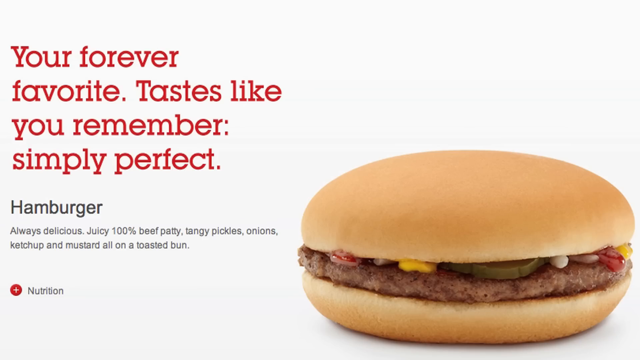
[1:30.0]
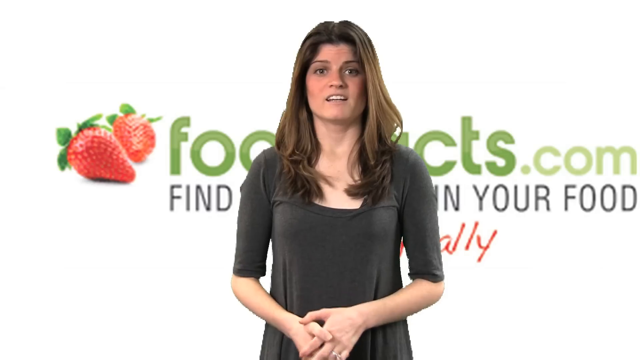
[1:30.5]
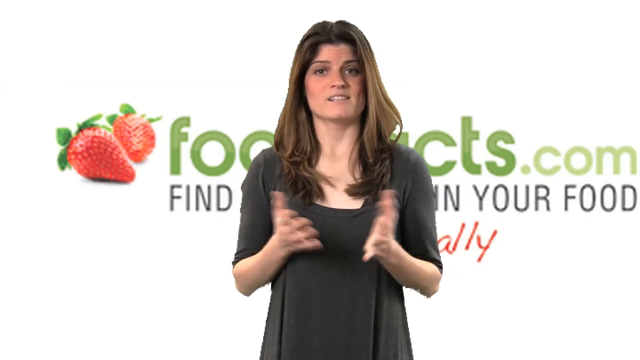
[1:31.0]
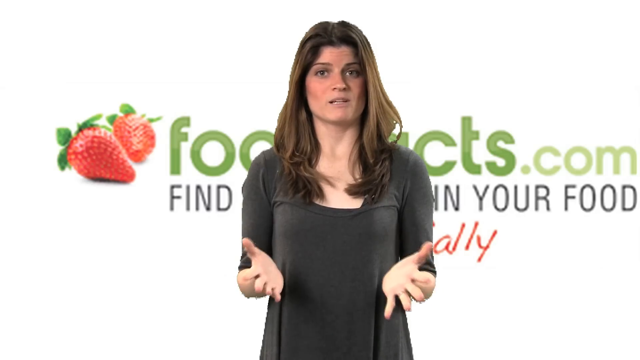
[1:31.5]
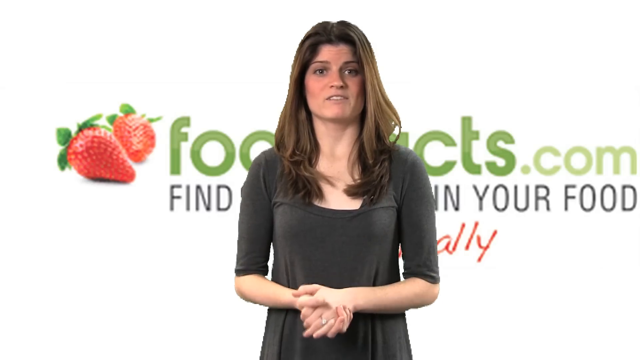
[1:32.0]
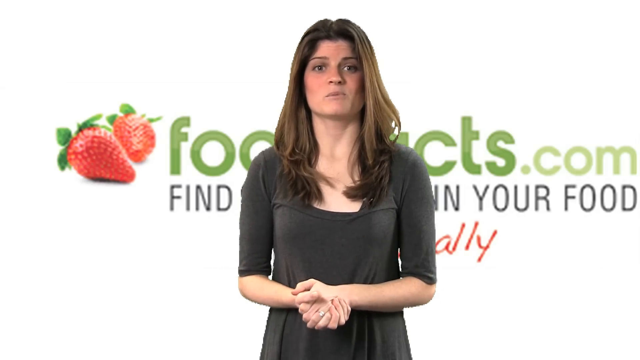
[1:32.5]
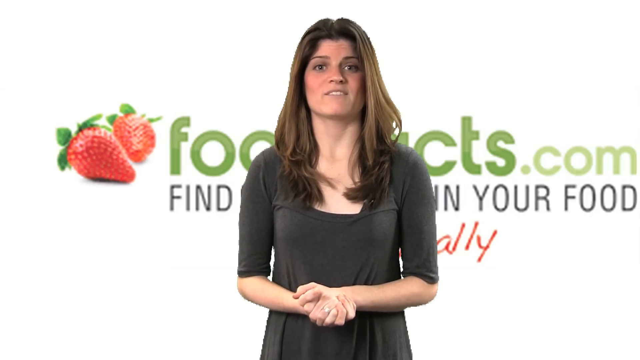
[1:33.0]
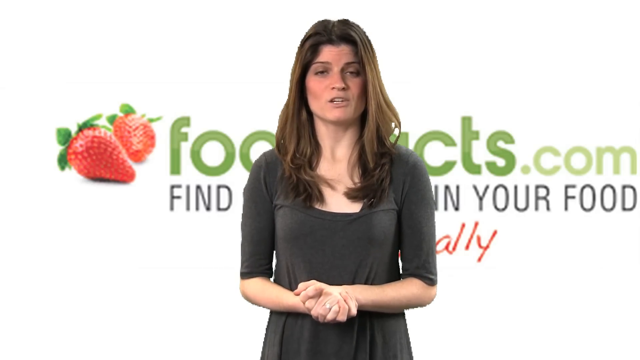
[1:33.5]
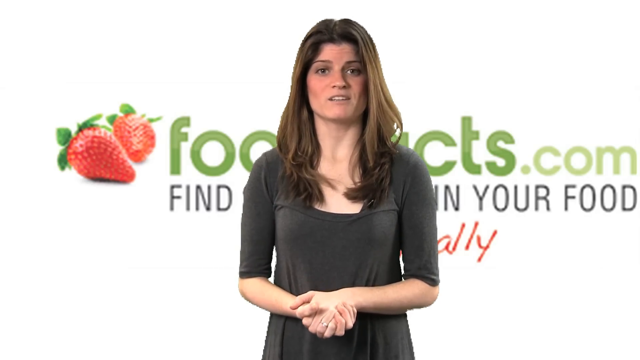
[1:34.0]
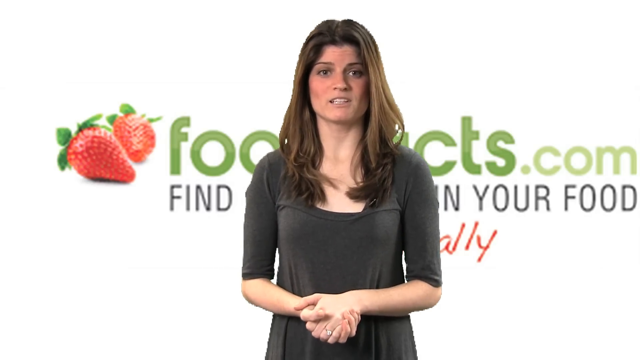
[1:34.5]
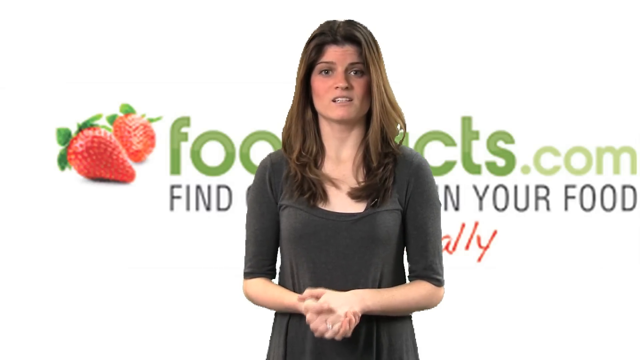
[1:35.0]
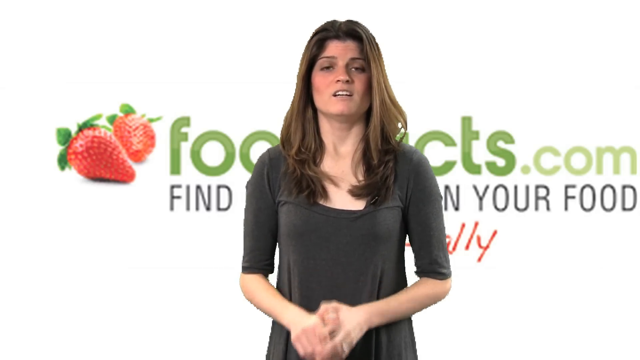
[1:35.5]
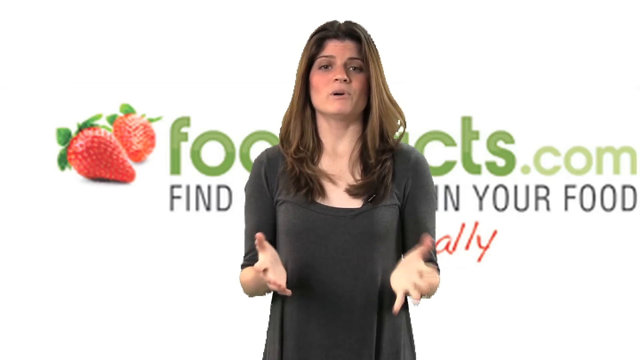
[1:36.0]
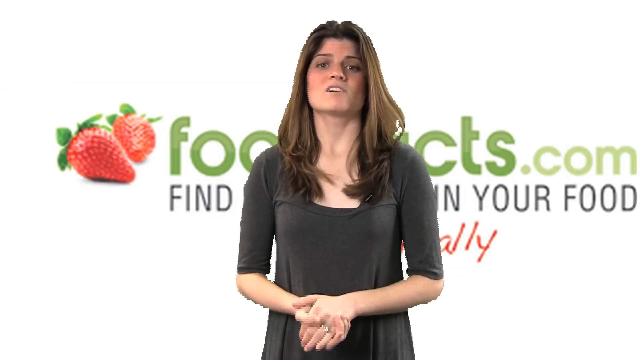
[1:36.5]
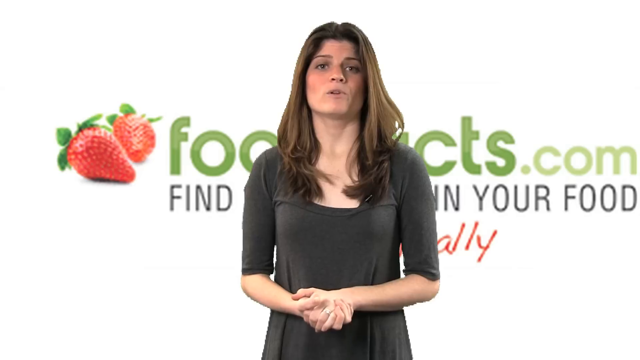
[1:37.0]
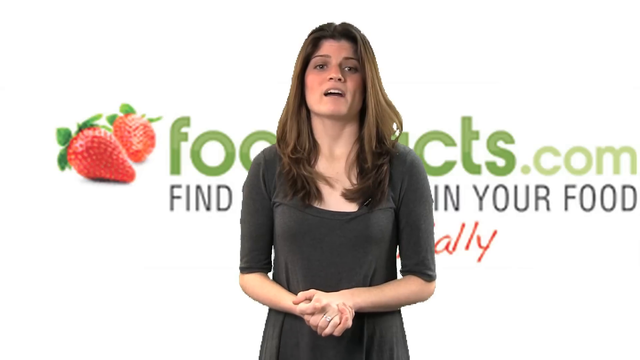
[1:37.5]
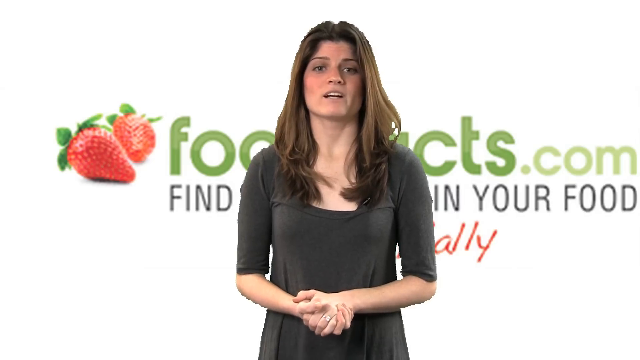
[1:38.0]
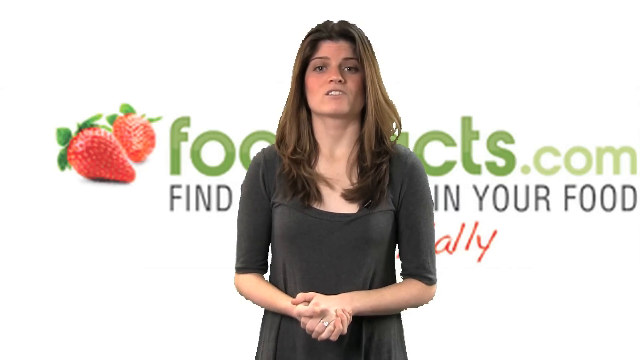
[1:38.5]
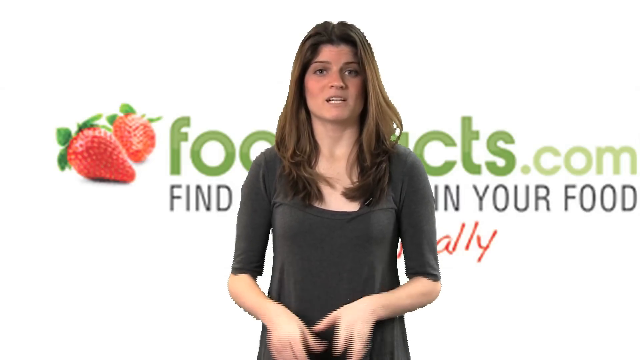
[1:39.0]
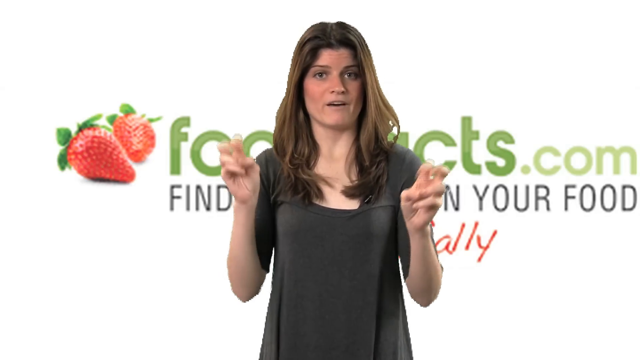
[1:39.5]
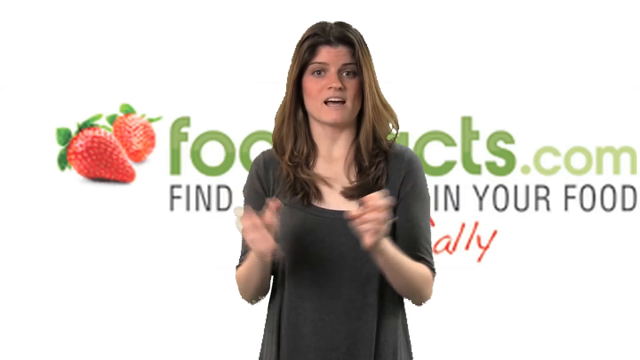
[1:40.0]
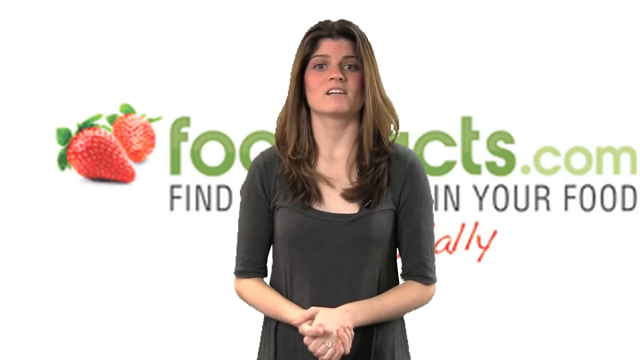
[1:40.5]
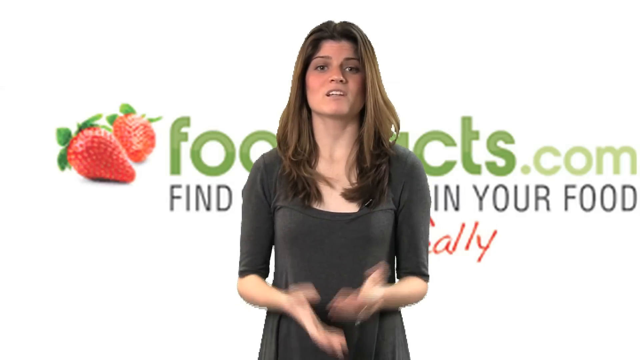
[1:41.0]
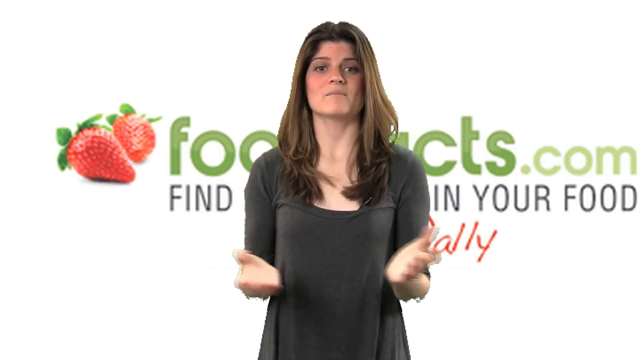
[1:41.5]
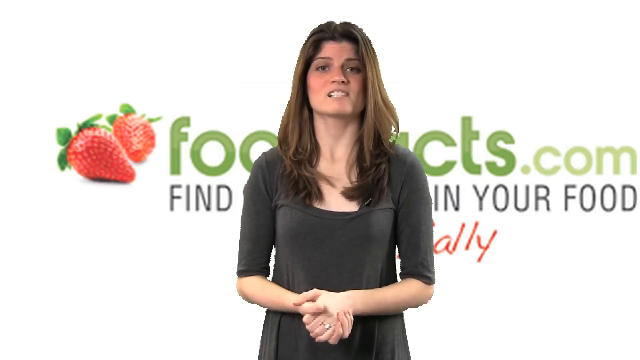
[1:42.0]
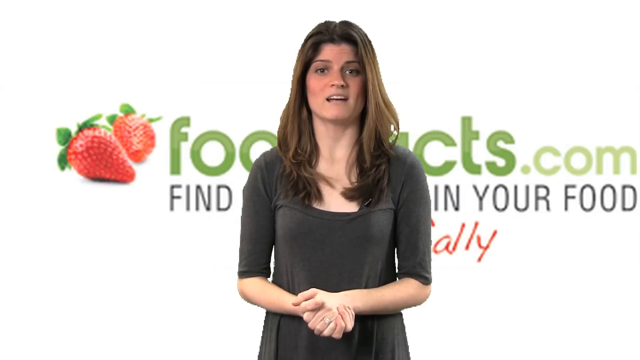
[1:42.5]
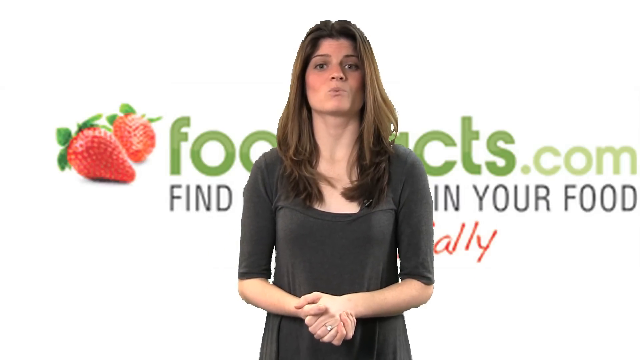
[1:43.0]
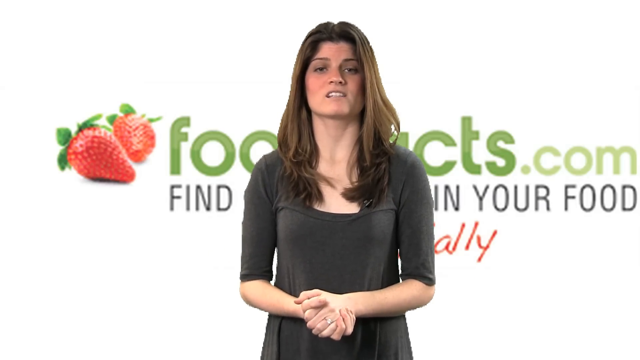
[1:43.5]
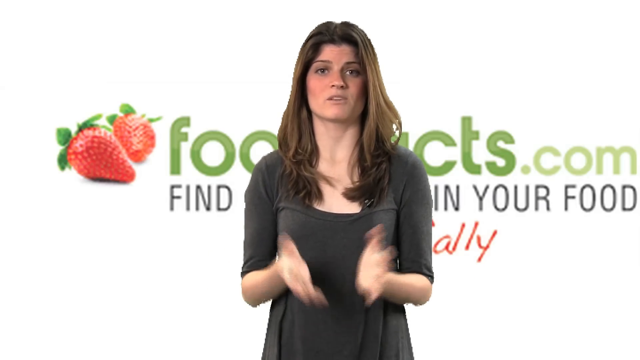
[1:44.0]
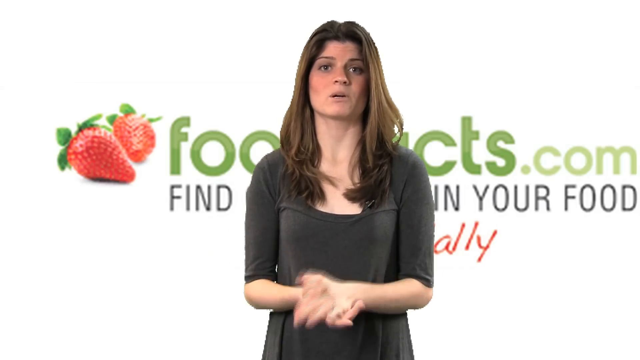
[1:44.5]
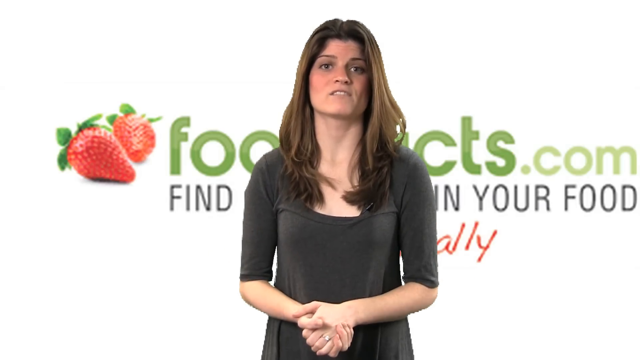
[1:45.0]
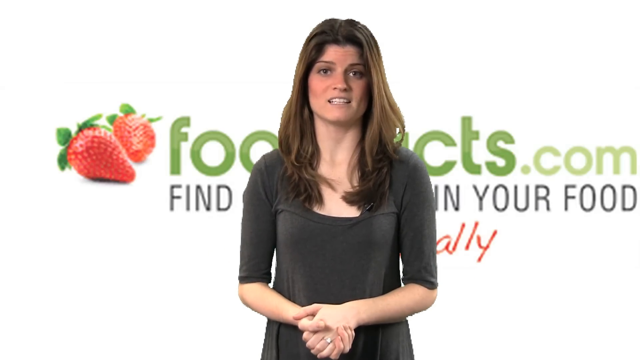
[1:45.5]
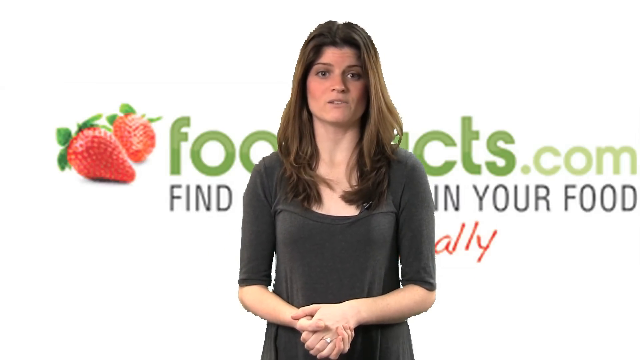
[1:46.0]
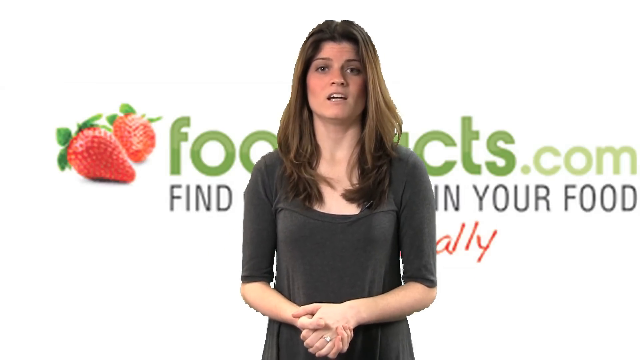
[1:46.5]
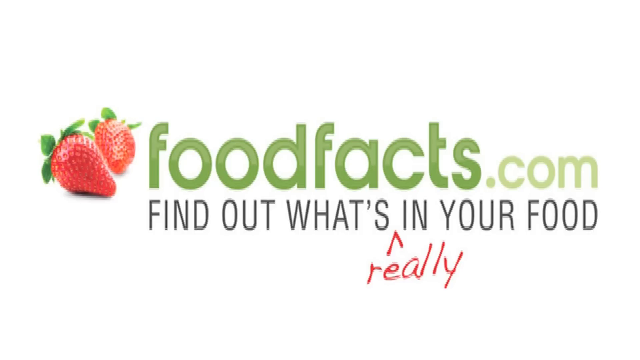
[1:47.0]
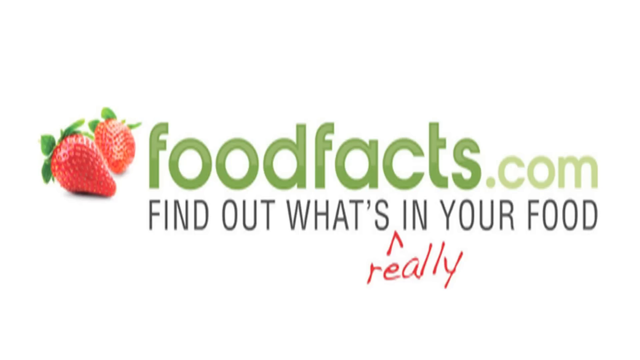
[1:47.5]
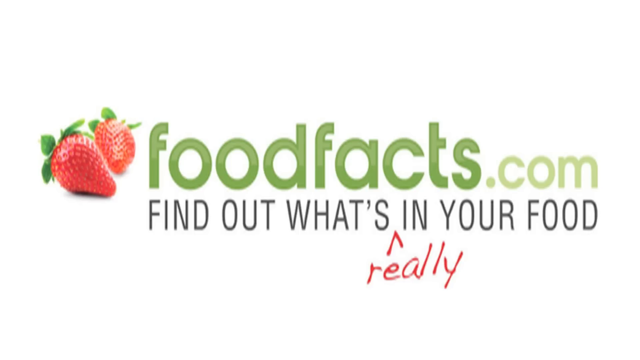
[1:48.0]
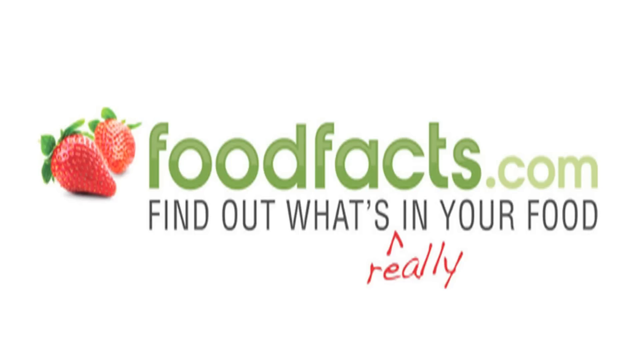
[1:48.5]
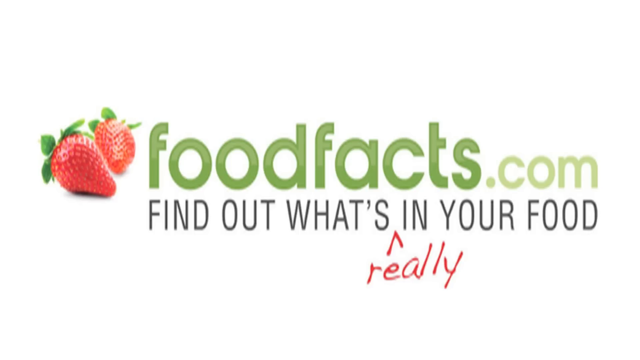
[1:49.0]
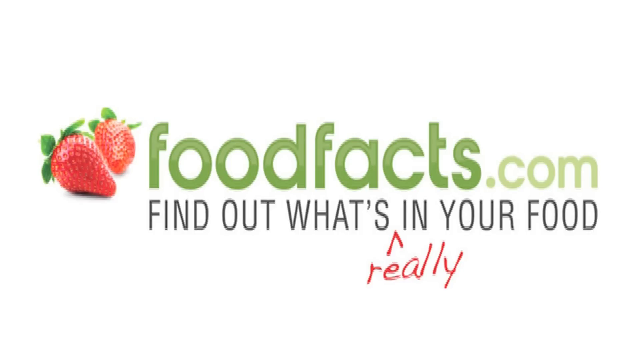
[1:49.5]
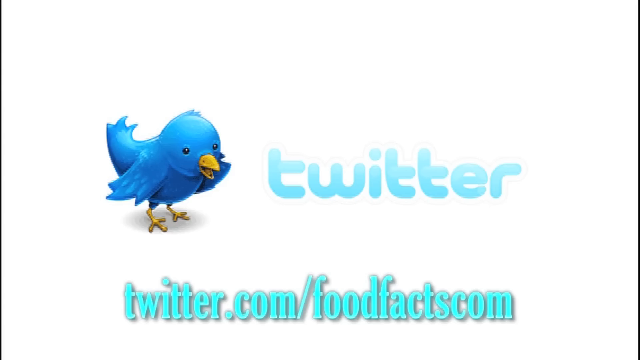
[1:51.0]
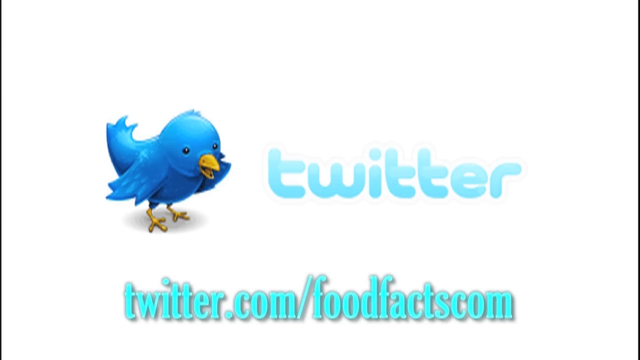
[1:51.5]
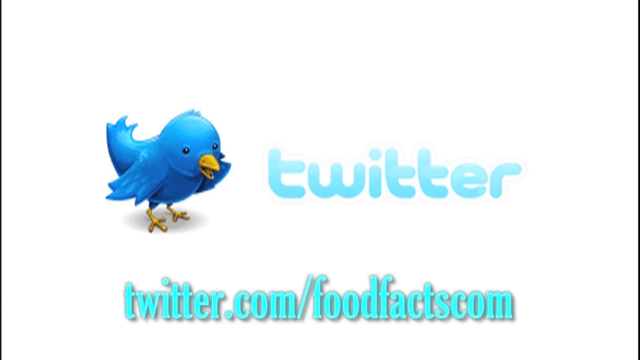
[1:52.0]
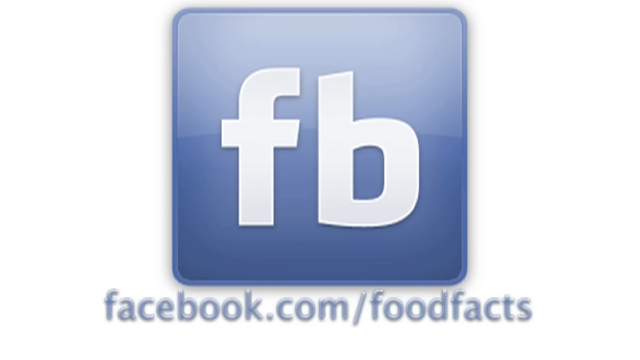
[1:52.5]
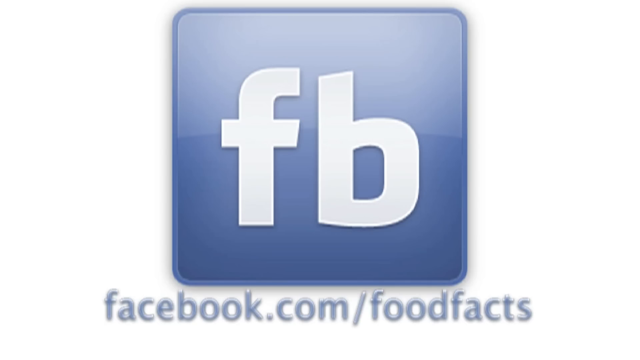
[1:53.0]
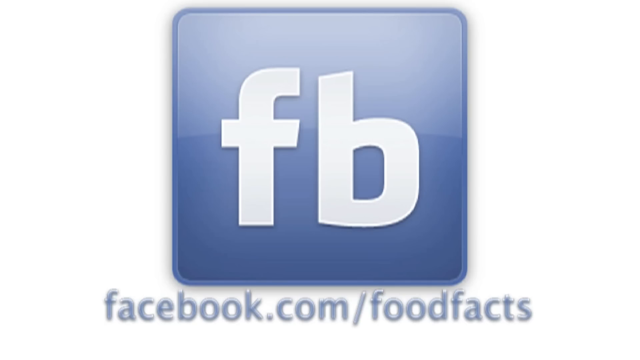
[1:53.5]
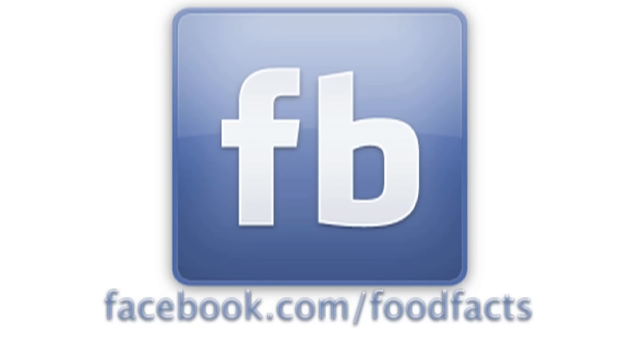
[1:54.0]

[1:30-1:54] The woman speaks again, bringing her hands apart with her palms basically facing the ceiling, then clasping them together with her left hand over her right, and repeatedly bringing them apart and back together as she speaks to the screen. At one point she makes air quotes with her fingers. At the end the green screen image is gone and the background is revealed: two strawberries on the left-hand side, and to the right, taking up most of the screen, the website "foodfacts.com", with "food facts" in a darker green and ".com" in a light green. Right below it, in black letters, it says "find out what's in your food", with a drawn-in up arrow between "what's" and "in" pointing at the white space, and underneath the arrow "really" is written in red. The next shot shows a white screen with a blue bird and, to its right, the word and logo for Twitter, with "twitter.com/foodfacts com" at the very bottom. The final shot shows a giant blue square with "FB" in white in the middle and "facebook.com/foodfacts" at the bottom.